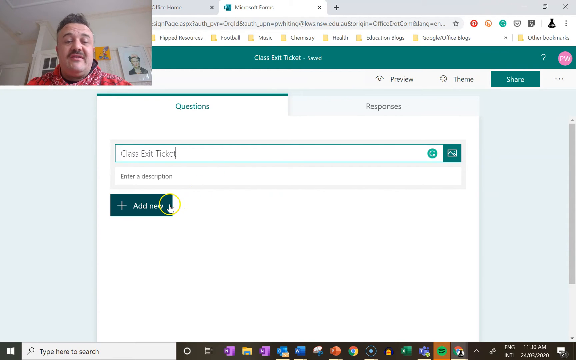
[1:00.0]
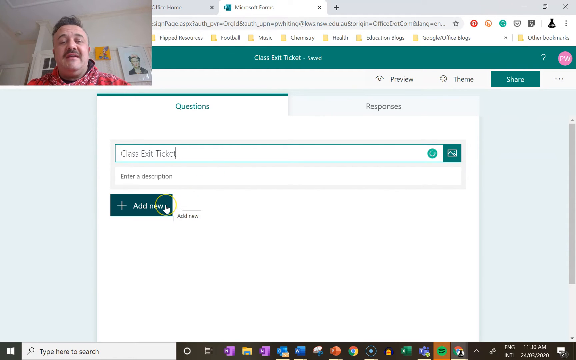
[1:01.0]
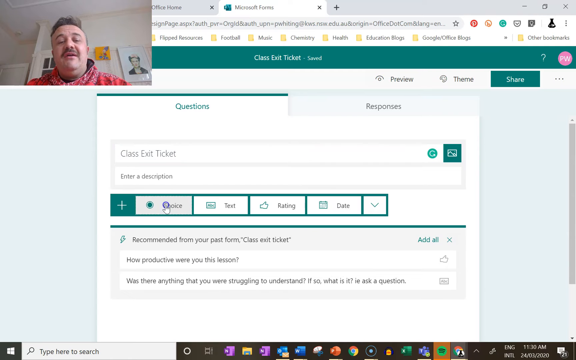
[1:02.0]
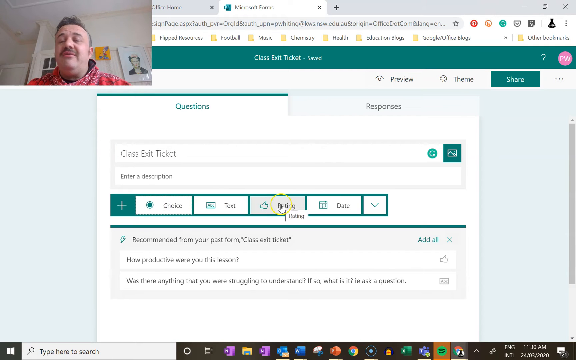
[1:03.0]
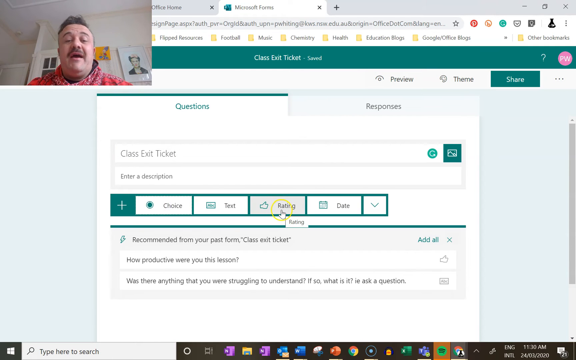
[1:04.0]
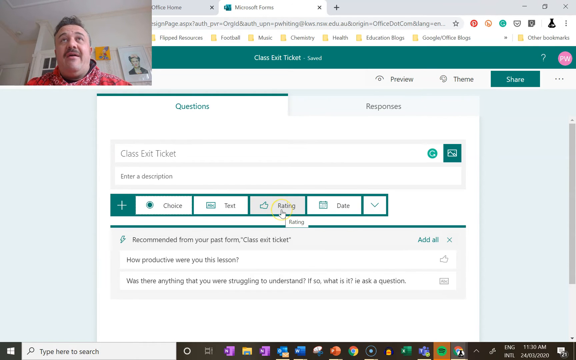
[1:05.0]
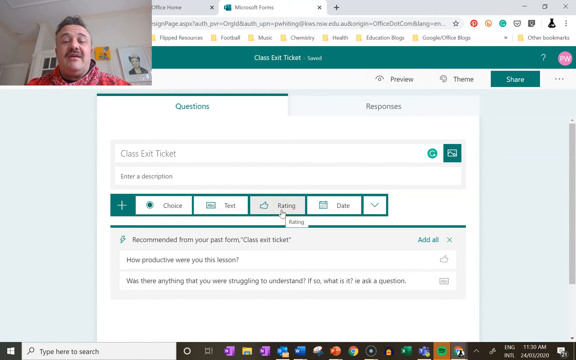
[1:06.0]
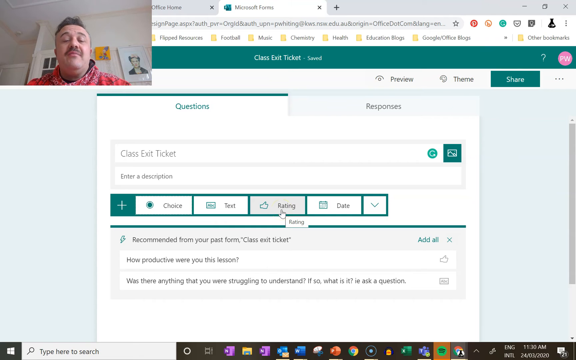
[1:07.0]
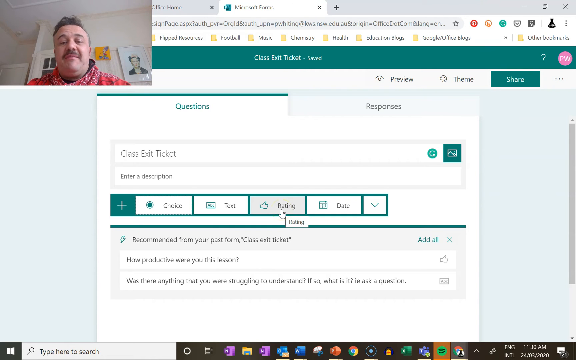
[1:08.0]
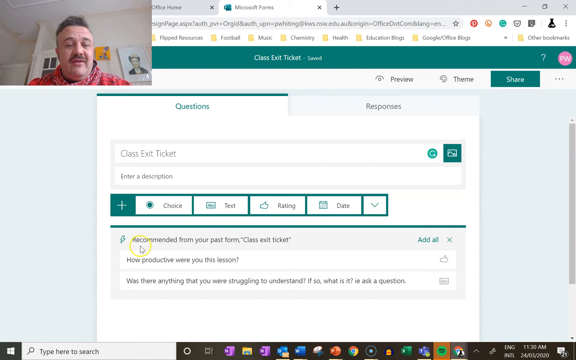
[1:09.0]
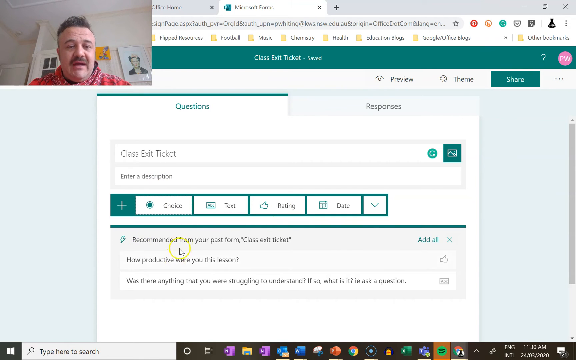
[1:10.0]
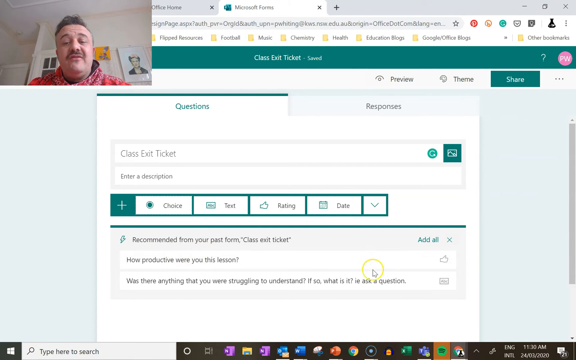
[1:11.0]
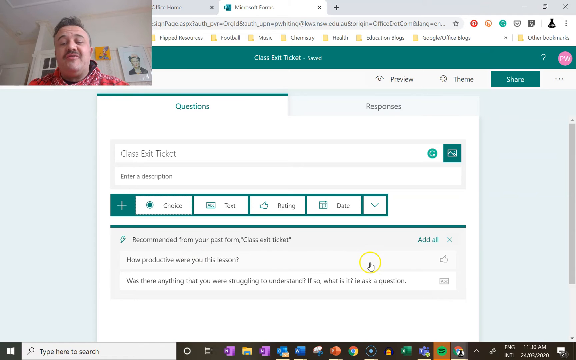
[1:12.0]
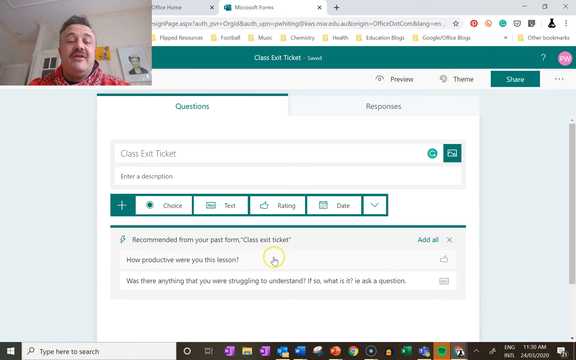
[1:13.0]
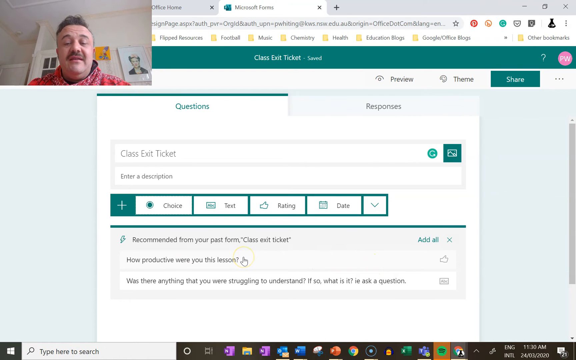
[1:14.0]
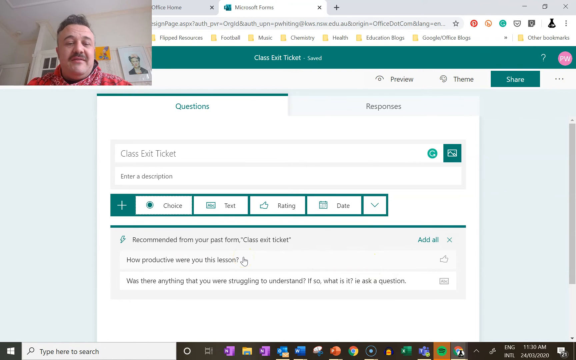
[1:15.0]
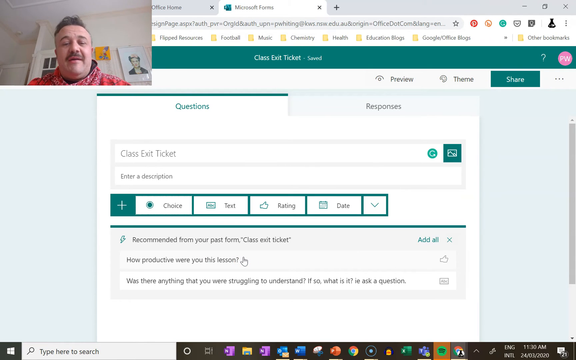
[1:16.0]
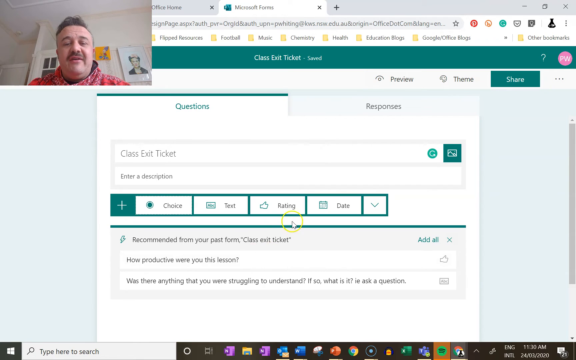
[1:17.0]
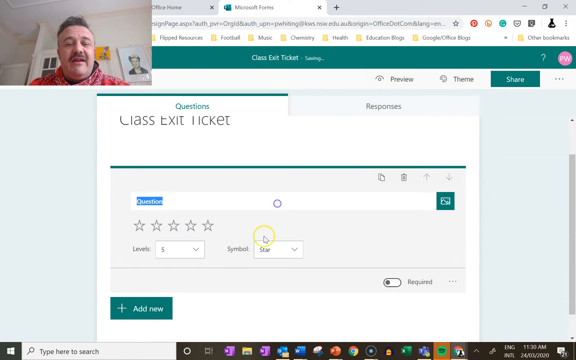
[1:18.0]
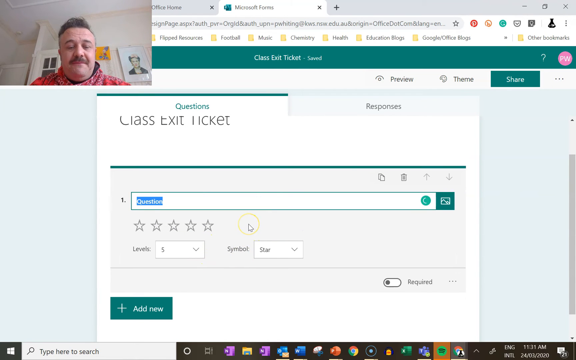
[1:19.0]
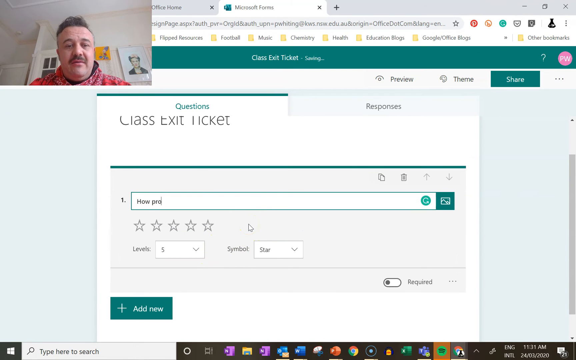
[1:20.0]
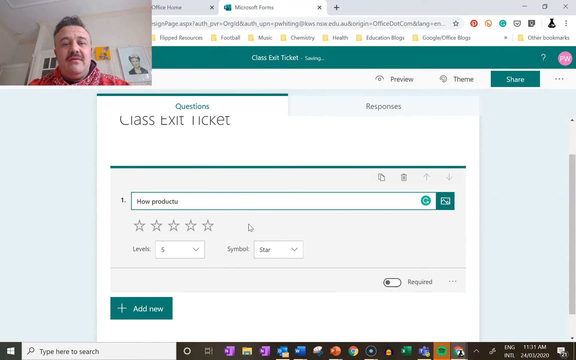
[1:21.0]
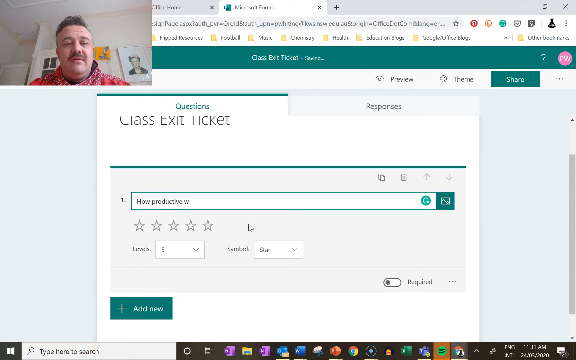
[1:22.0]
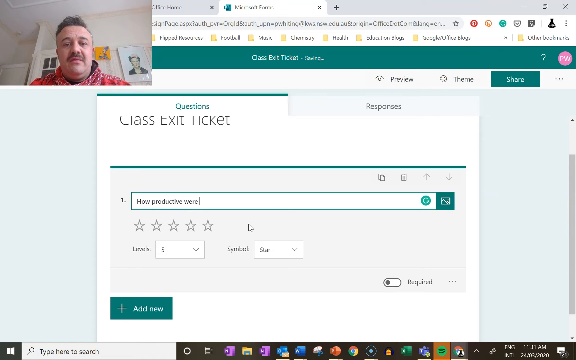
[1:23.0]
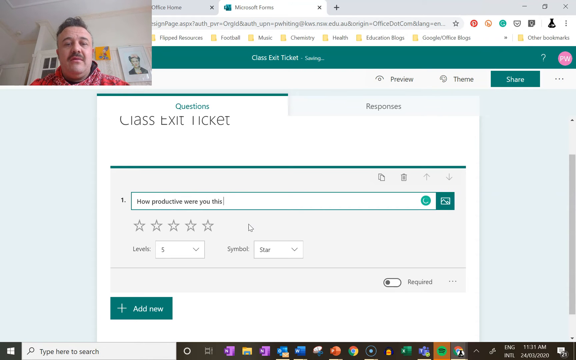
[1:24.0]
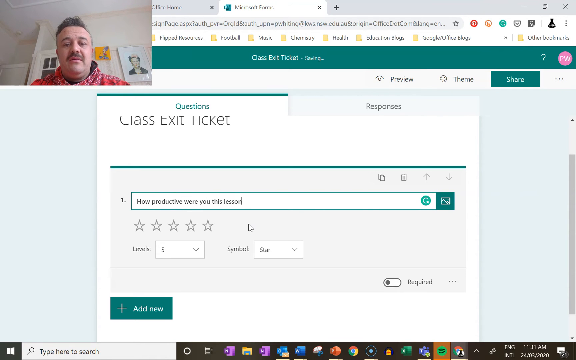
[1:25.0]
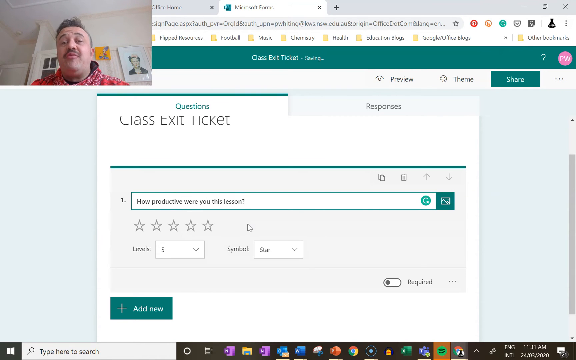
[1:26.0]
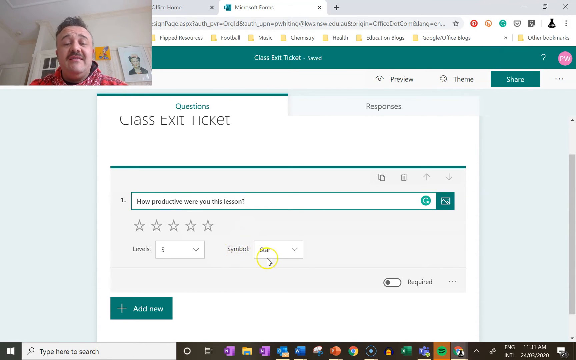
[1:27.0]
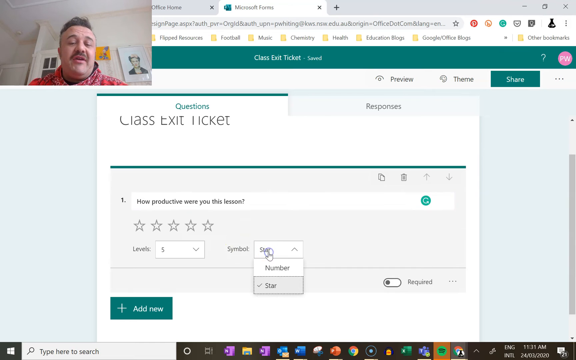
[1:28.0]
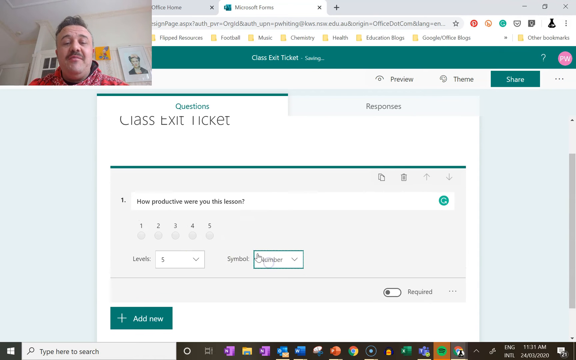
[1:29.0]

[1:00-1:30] The man vlogs from the upper left corner of the screen while using a thin yellow circle with a finger cursor in the middle to show where he clicks. He clicks on "add new", and another section pops up that says "add new". He then clicks on "rating", which opens a whole box. Further down the text reads "how productive were you this lesson? Was there anything that you were struggling to understand? If so, what is it? I.e. ask a question". He clicks on the productivity question, and in the question field he types the question but leaves out the word "in", so it reads "how productive were you lesson". "class exit ticket" is shown, and that section is now filled in.